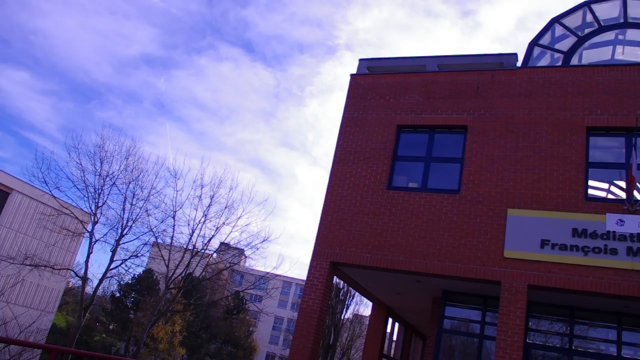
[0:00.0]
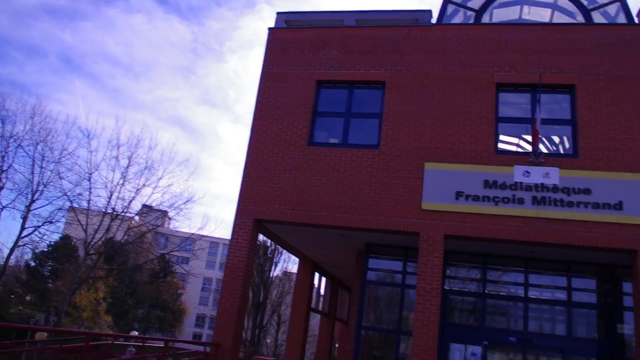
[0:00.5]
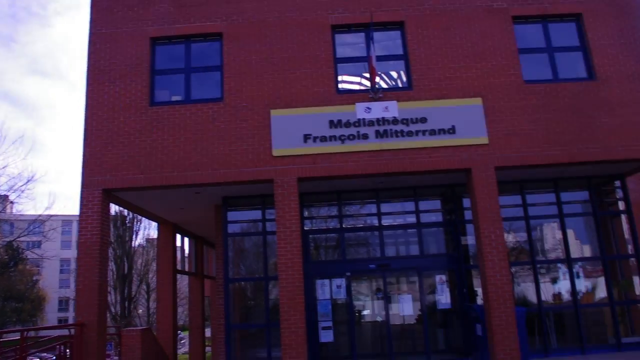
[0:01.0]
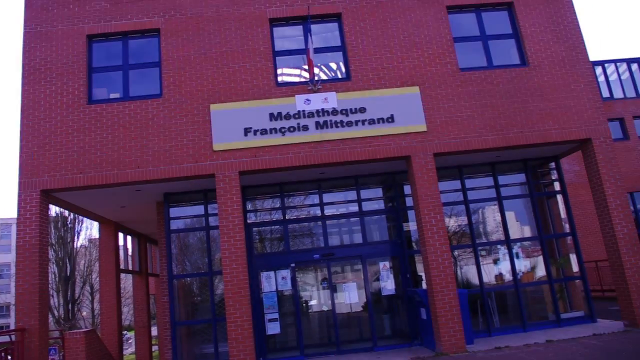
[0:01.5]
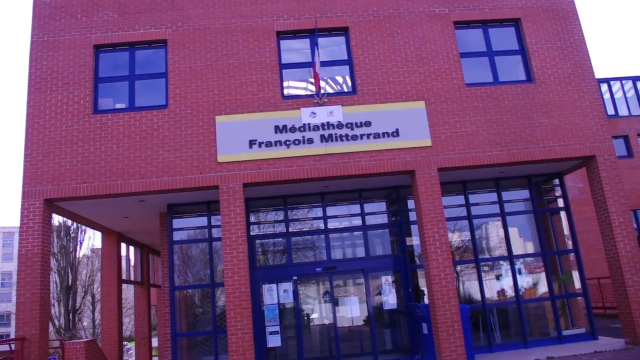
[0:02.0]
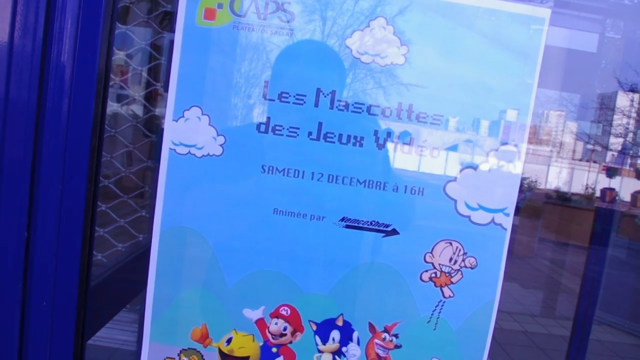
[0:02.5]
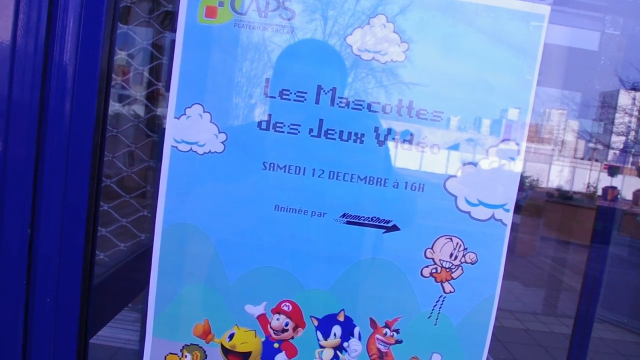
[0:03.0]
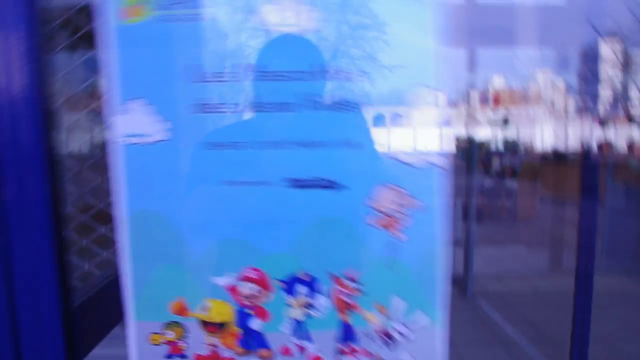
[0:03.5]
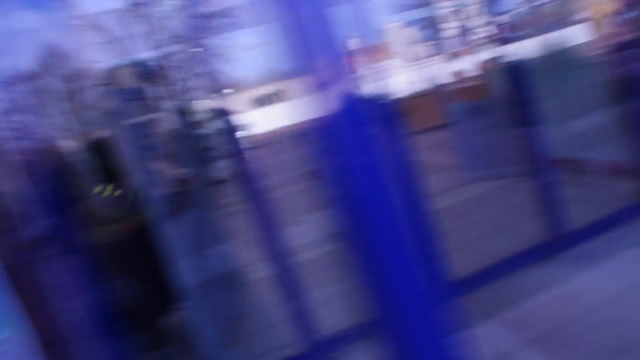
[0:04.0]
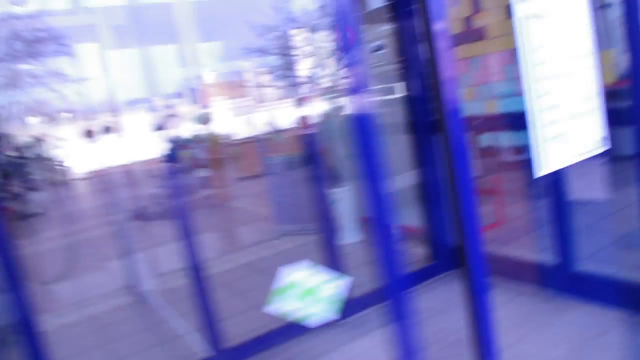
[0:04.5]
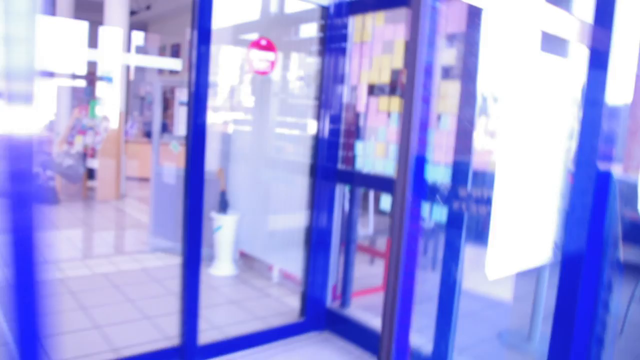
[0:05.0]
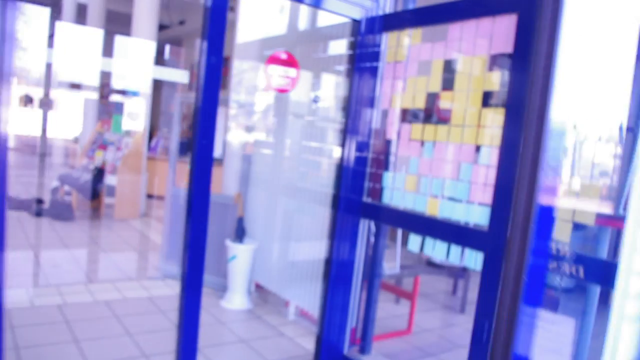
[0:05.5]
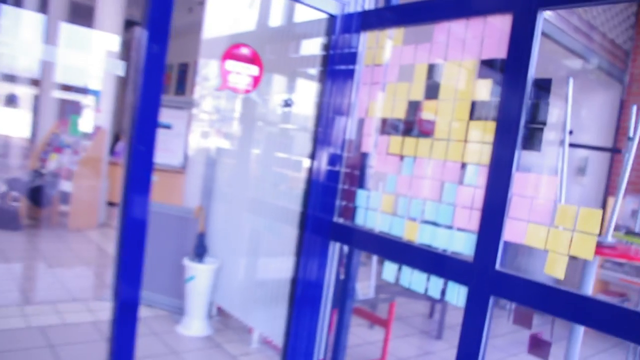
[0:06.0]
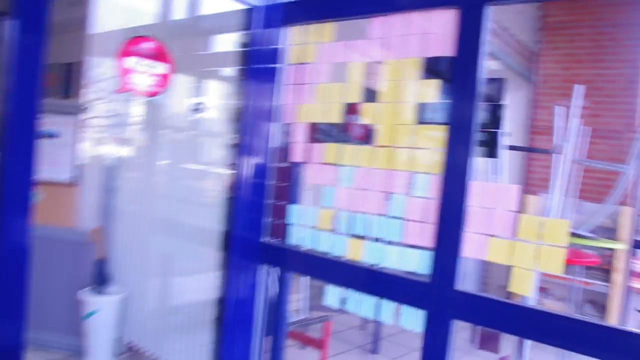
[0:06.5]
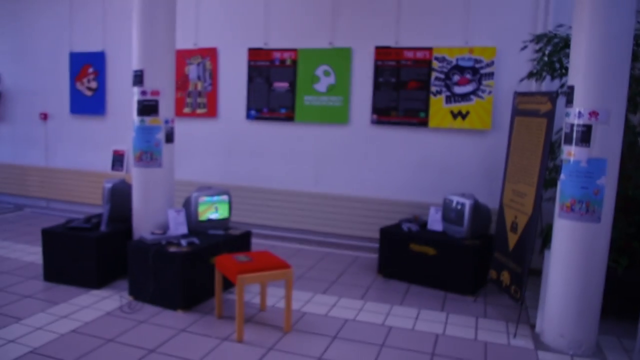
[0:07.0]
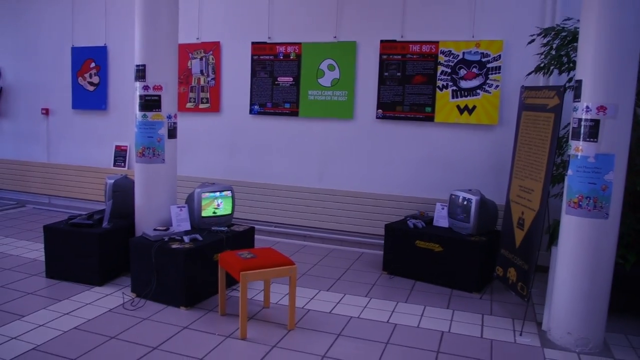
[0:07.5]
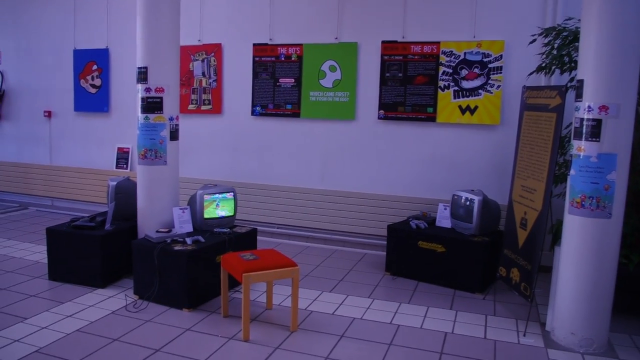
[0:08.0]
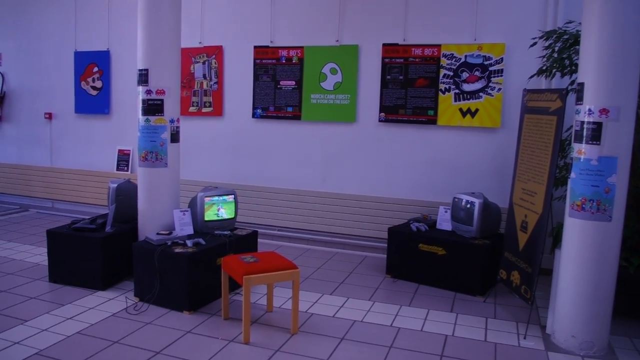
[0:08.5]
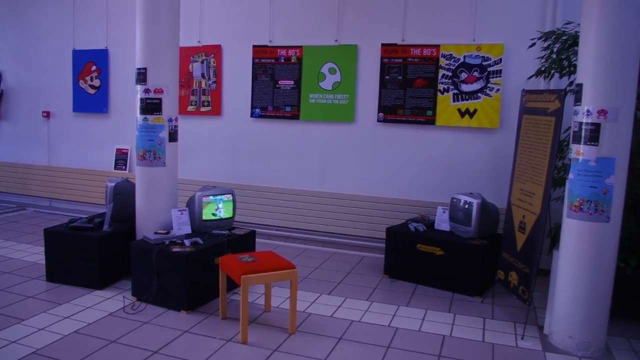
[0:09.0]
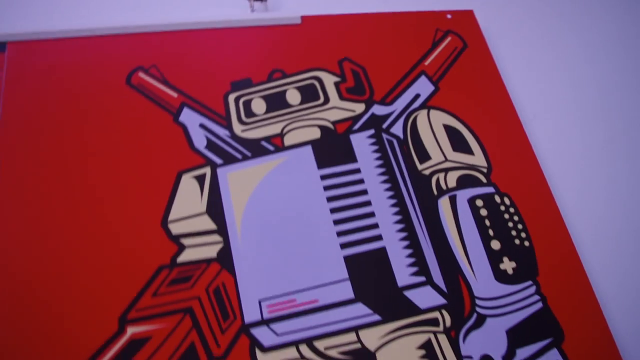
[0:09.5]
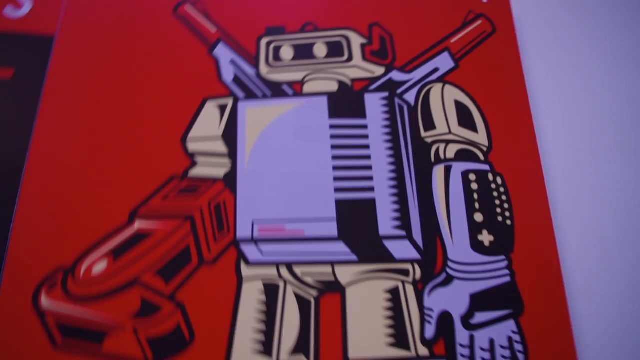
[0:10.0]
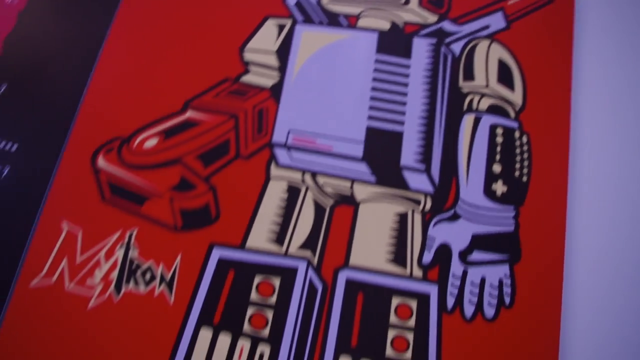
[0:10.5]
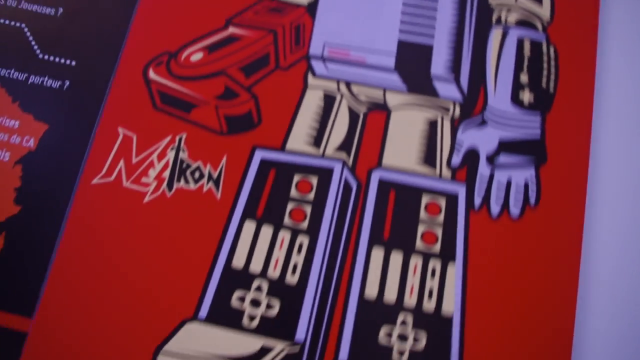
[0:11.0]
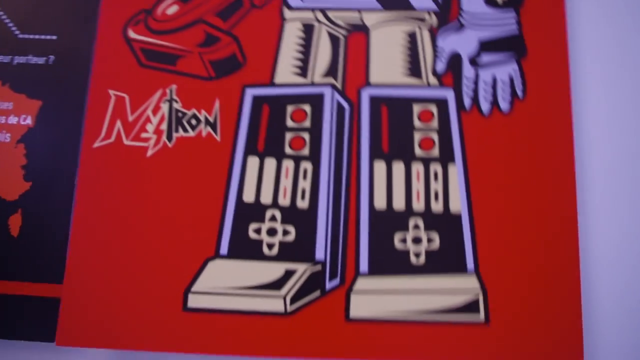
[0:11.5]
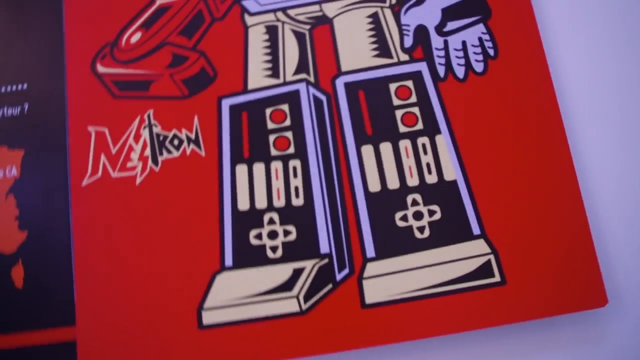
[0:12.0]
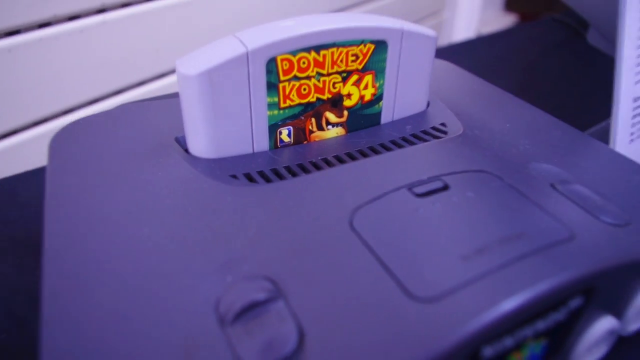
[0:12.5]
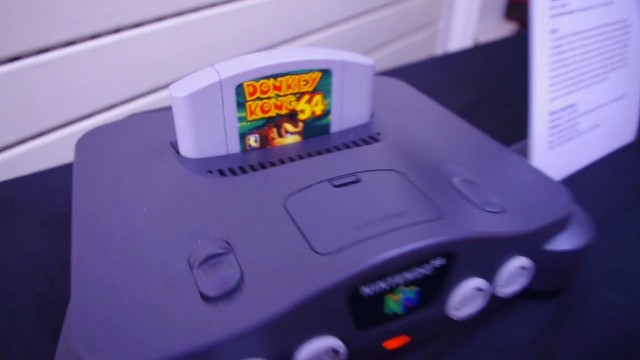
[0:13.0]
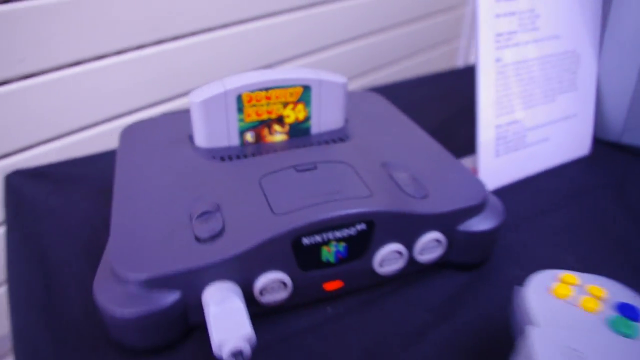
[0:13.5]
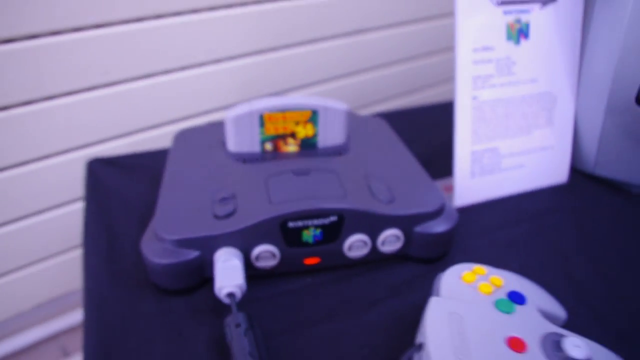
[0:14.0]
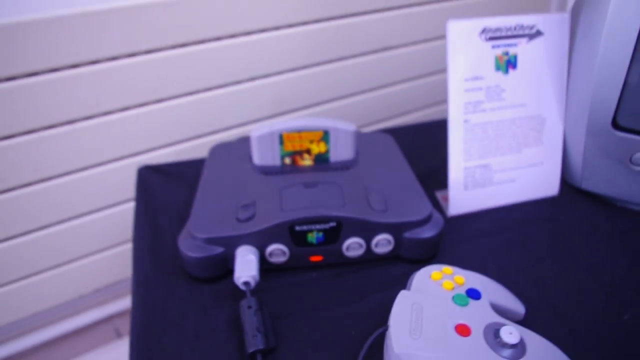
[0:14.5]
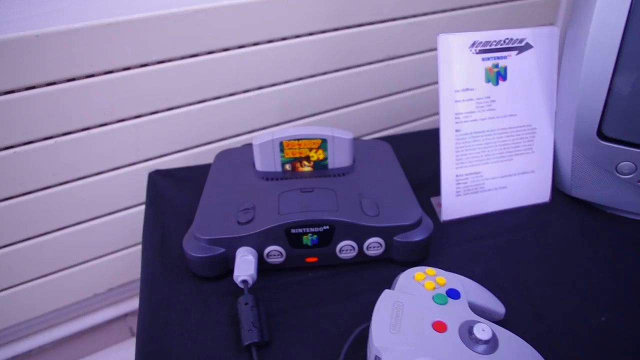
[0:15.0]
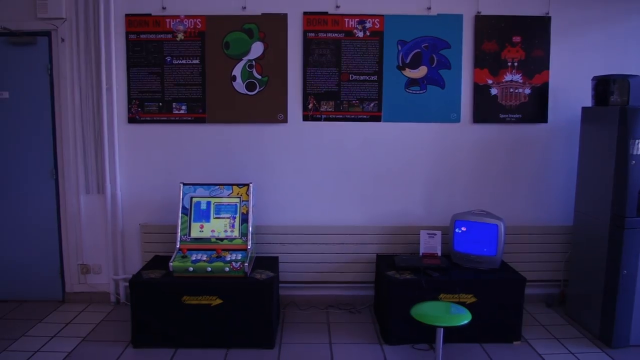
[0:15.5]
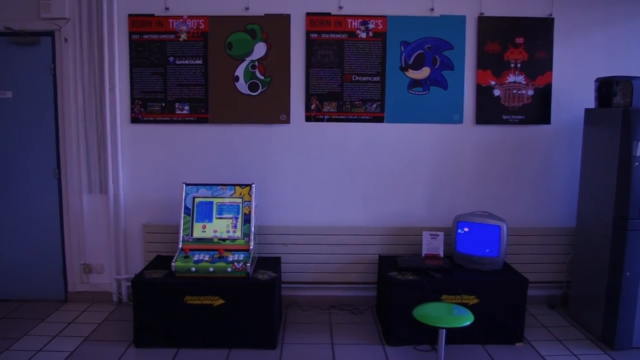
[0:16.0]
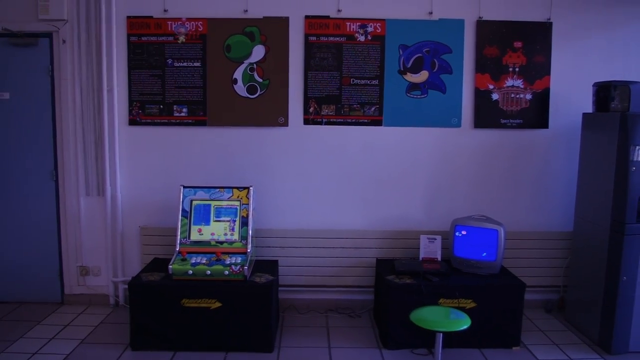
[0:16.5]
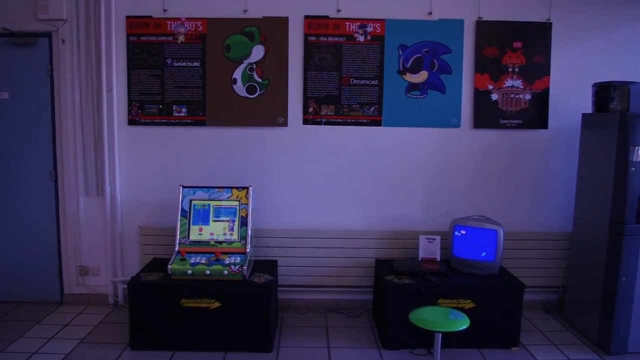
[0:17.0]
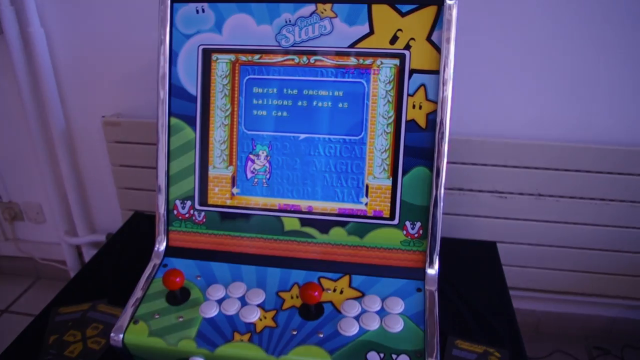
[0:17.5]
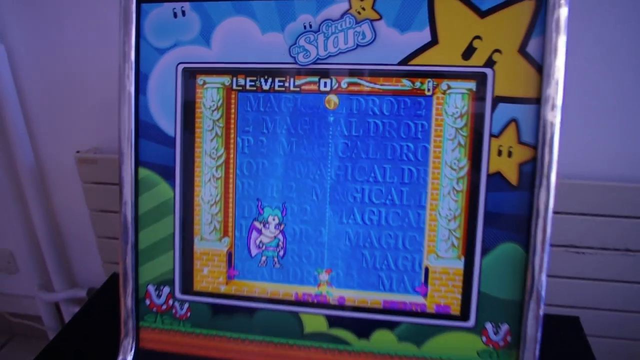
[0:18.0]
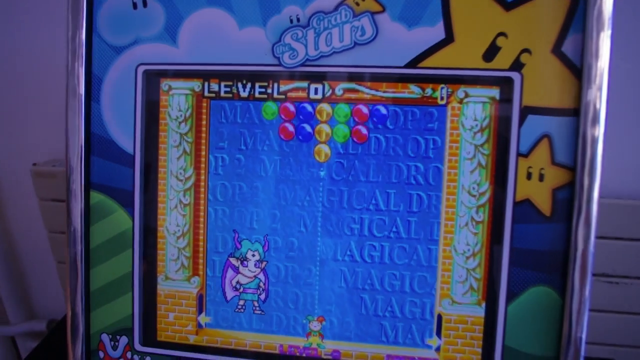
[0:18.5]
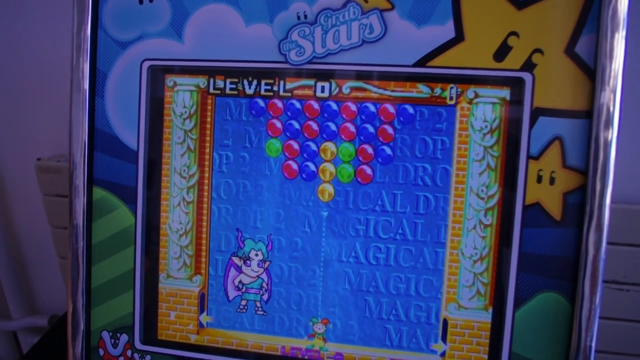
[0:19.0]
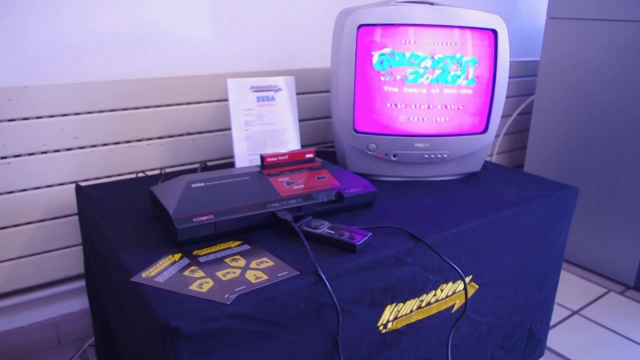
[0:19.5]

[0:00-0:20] The video opens like a vlog, with a man recording outside an unidentified building whose title or name appears to be in French. The camera pans over to a poster covered with old-school video game characters; it shows a date, the 12th of December, and a time that looks like 4 p.m. After the pan away from the poster, he heads inside the building, where there is video game memorabilia along with video game consoles laid out on tables with infographics. It is possibly some kind of video game museum.